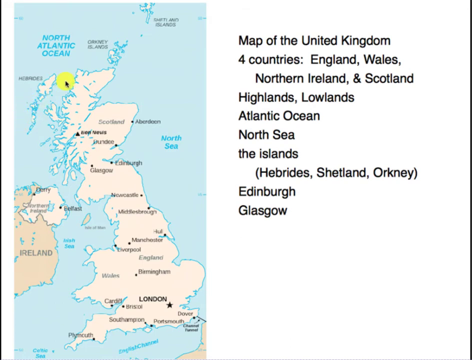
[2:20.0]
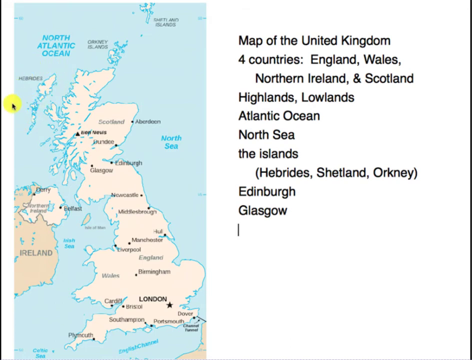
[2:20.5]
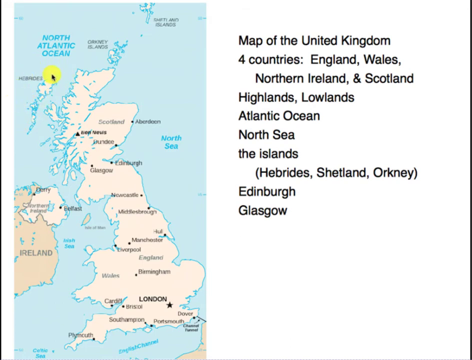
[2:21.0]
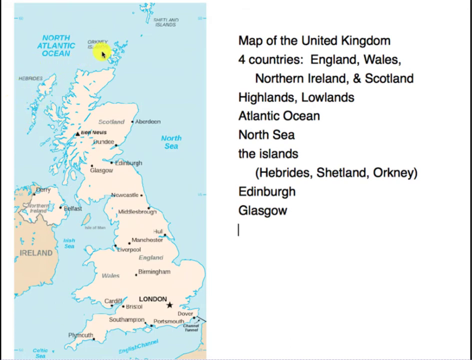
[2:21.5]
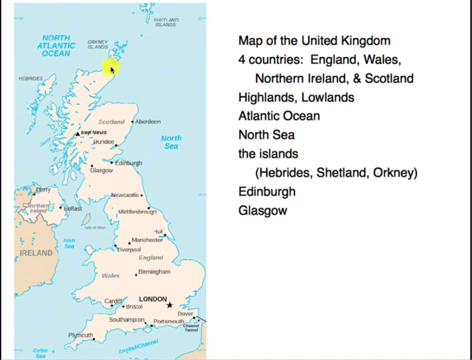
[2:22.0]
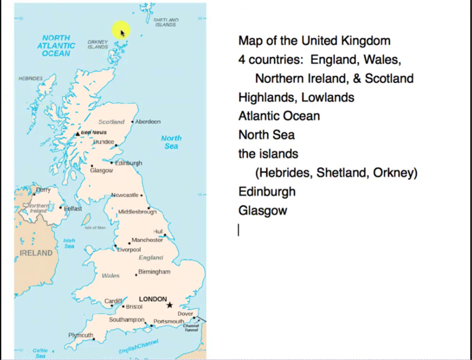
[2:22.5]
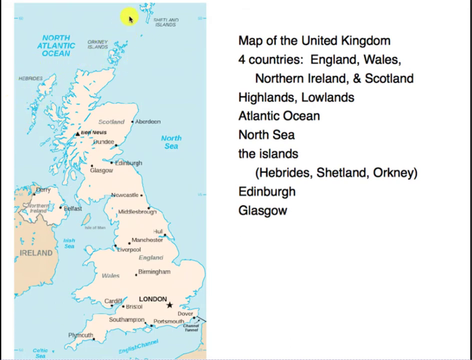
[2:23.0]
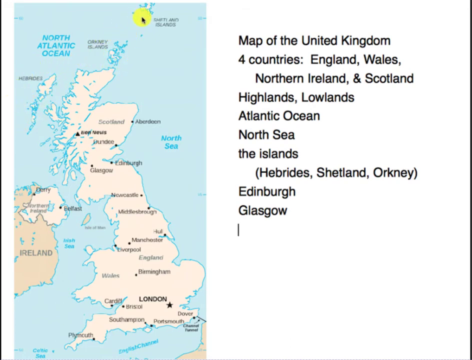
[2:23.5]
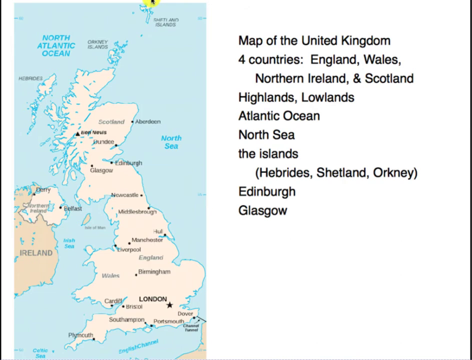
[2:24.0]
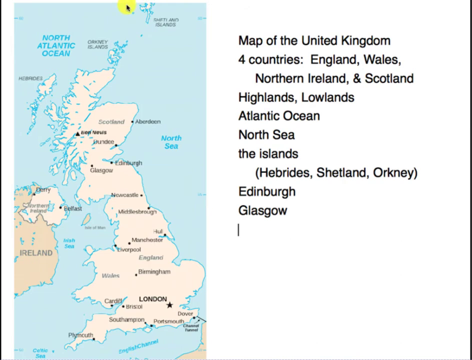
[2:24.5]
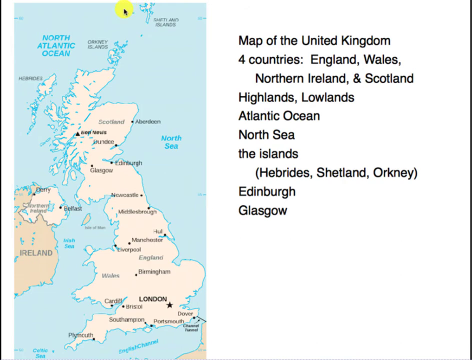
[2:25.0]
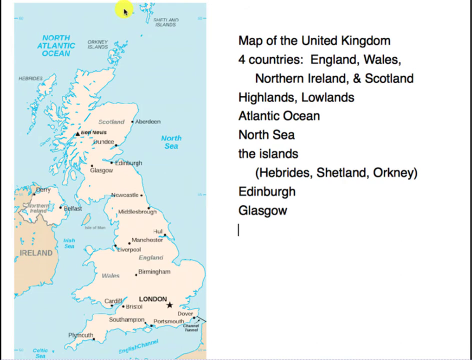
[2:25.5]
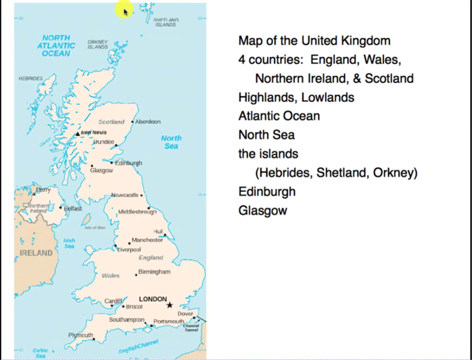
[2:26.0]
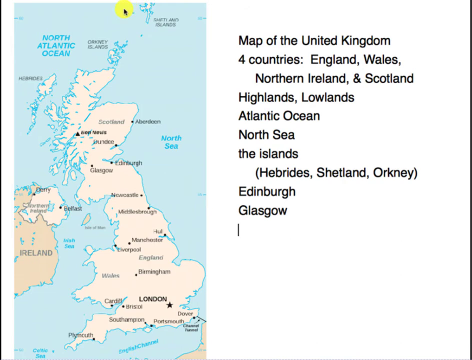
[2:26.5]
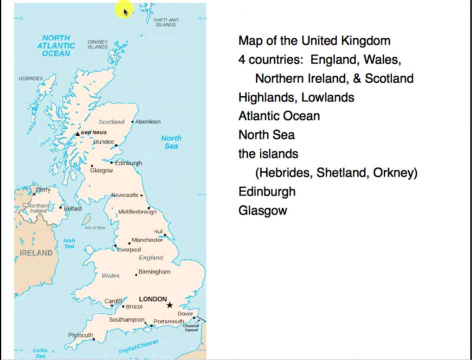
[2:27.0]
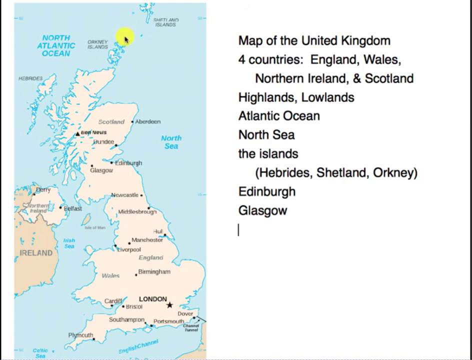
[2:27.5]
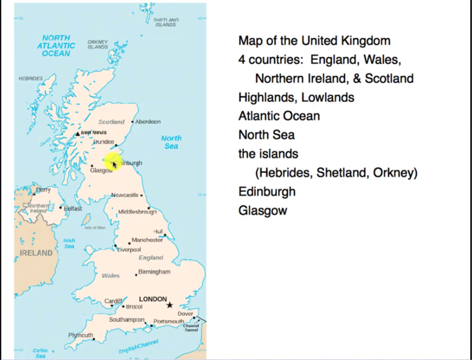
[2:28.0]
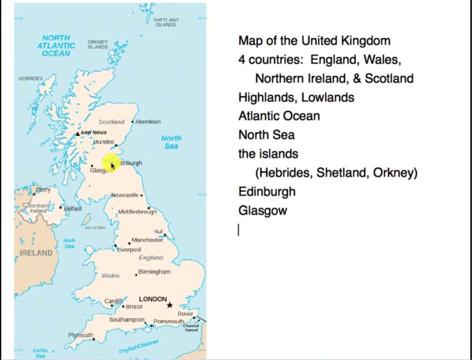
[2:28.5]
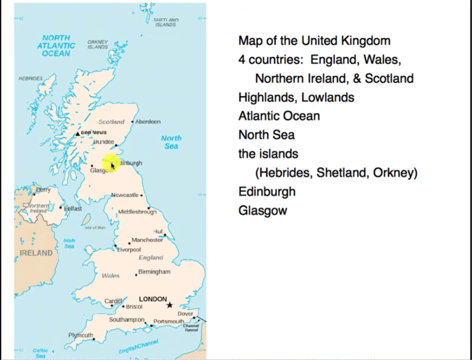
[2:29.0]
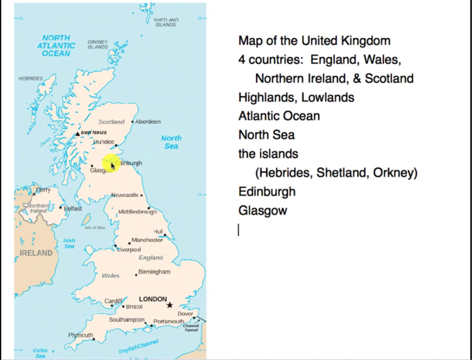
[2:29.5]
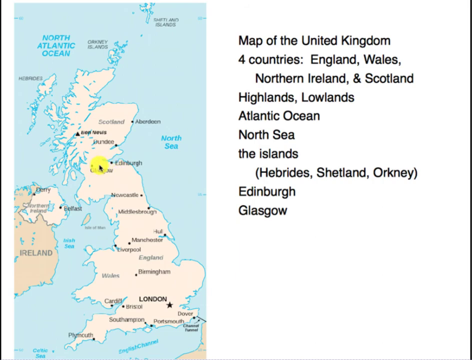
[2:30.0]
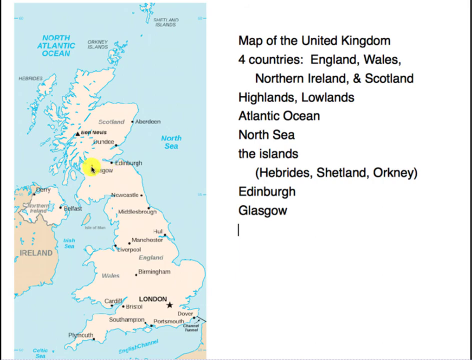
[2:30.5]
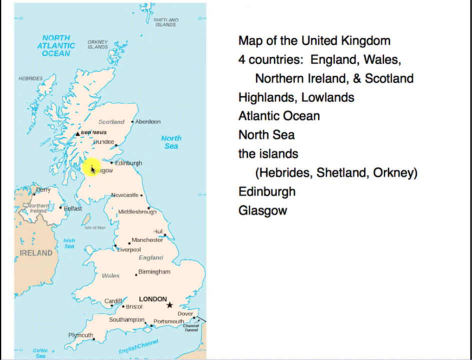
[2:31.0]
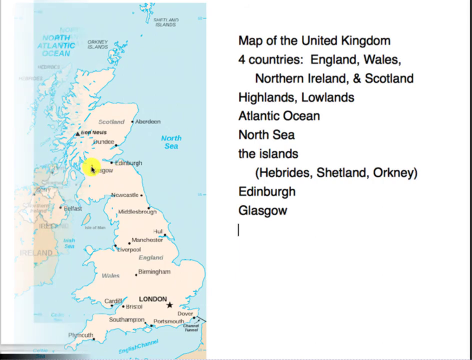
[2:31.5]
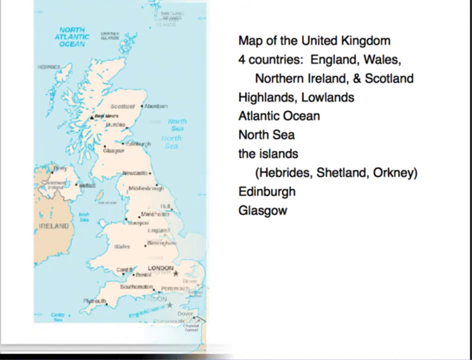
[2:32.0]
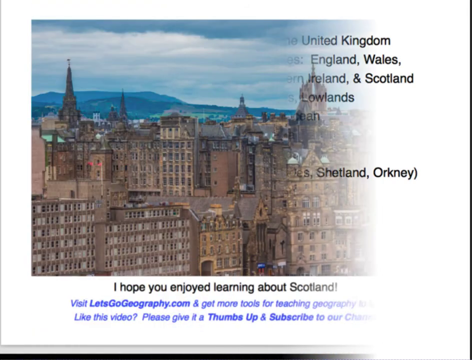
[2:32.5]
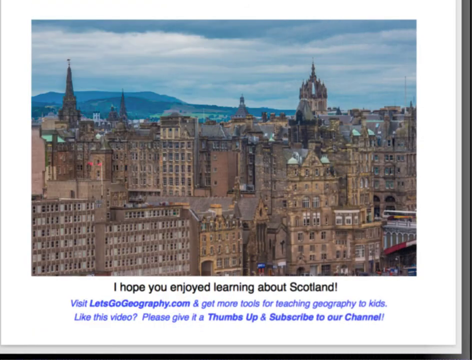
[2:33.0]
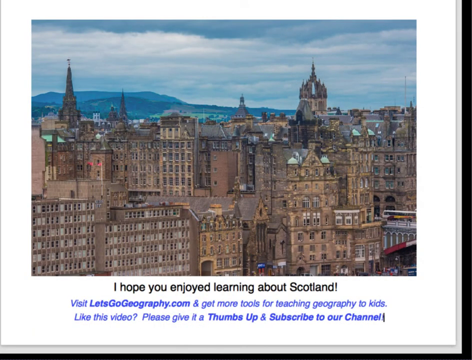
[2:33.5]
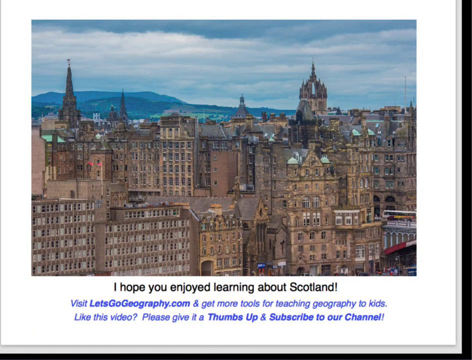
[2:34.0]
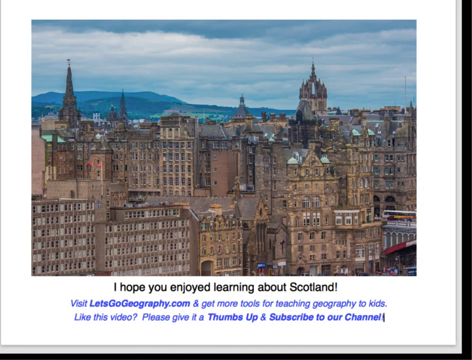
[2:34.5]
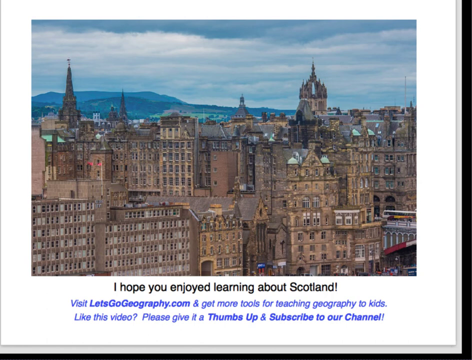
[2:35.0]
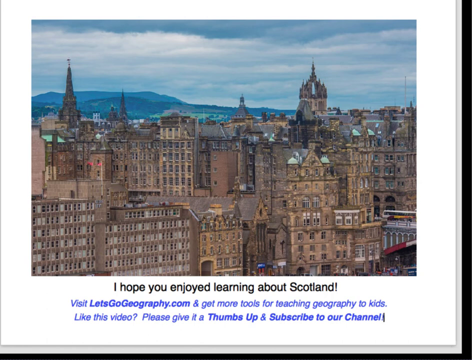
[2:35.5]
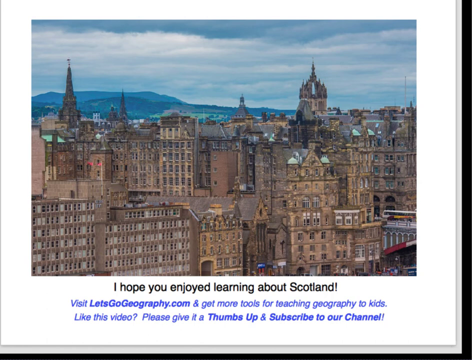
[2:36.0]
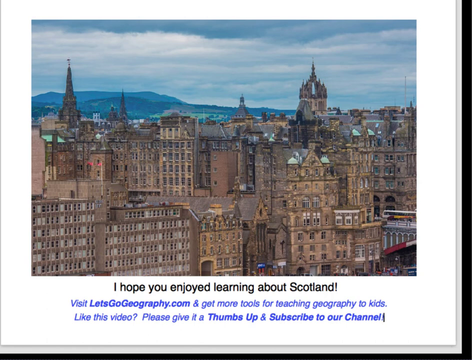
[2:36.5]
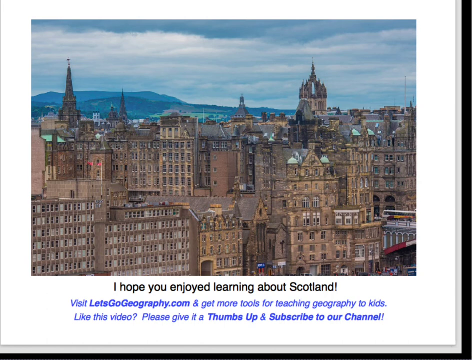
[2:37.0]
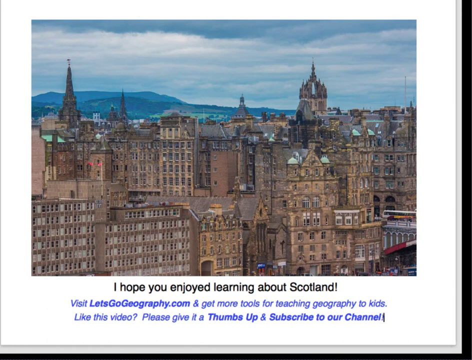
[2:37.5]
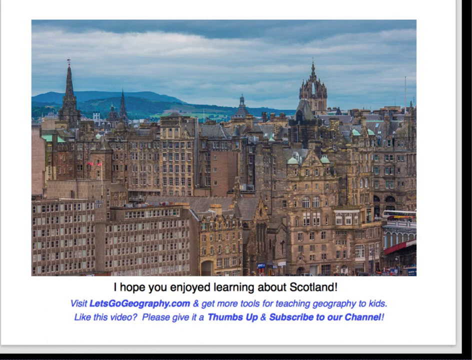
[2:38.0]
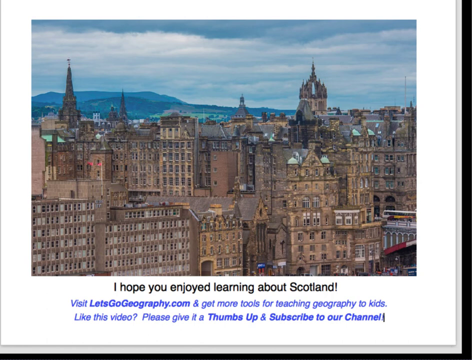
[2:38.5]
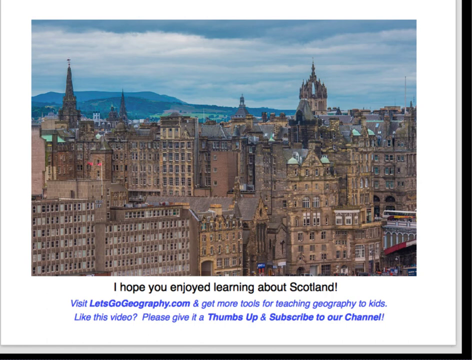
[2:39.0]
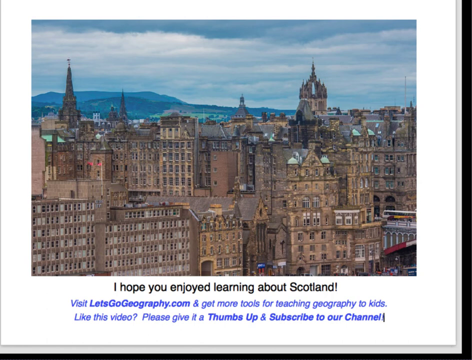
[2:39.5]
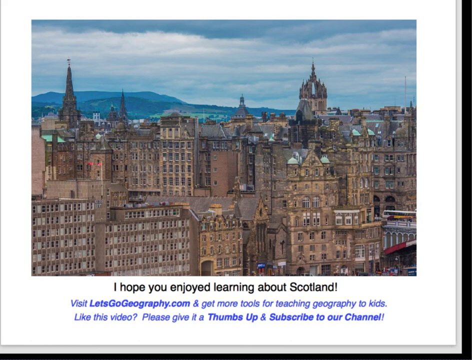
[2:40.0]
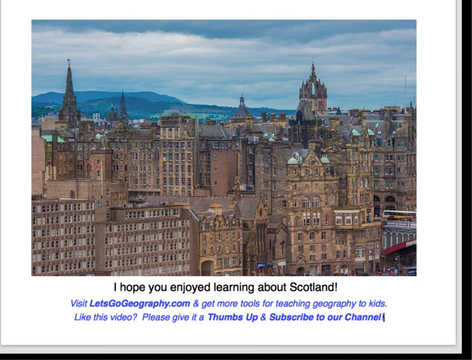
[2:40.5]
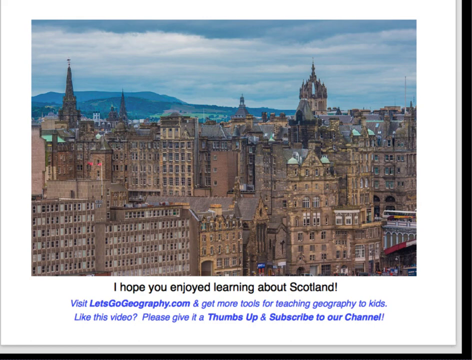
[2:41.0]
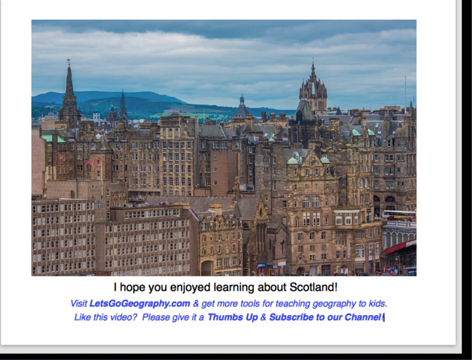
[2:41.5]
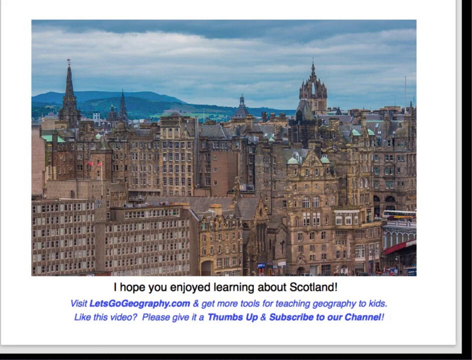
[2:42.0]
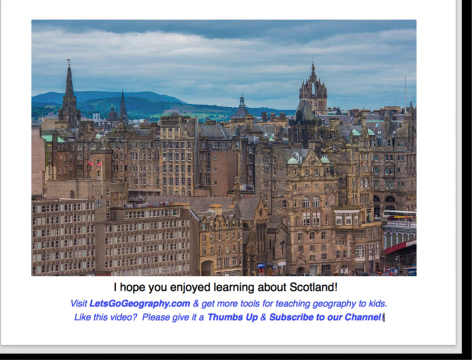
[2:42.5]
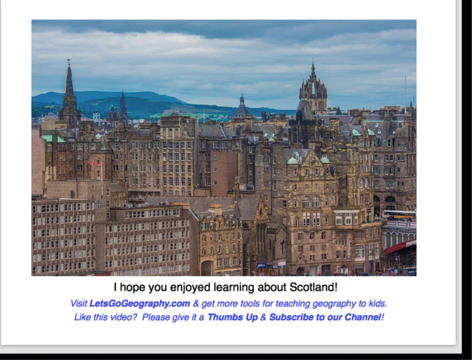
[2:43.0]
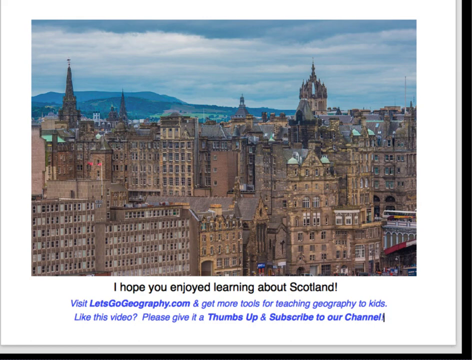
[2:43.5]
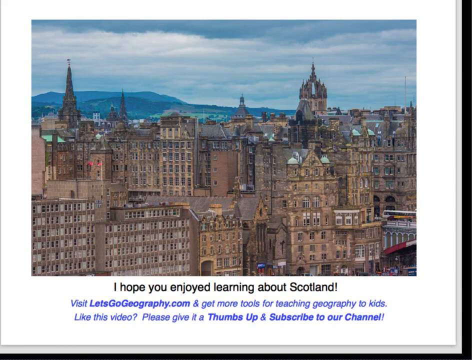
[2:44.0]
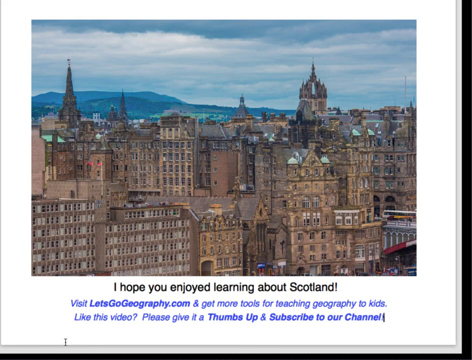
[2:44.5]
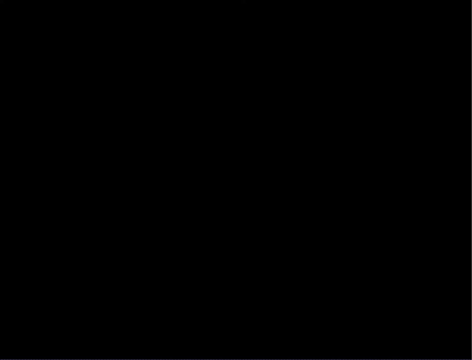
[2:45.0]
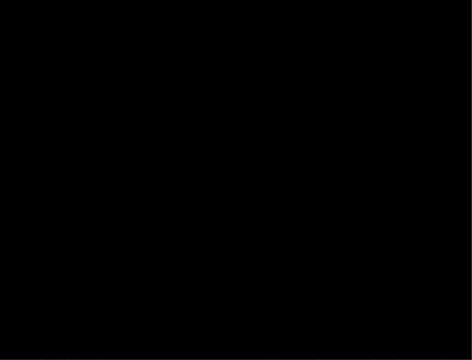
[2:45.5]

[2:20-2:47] The yellow cursor continues to highlight various parts of the map of the United Kingdom, including Edinburgh and Glasgow. The slideshow then moves to a picture of a large castle building; there are many in the image, in gold, bronze and copper colors. In the far distance are tall mountains and rolling hills under a dark blue sky with lots of clouds rolling in. The text at the bottom reads, "I hope you enjoyed learning about Scotland. Visit LetsGoGeography.com and get more tools for teaching geography to kids. Like this video? Please give it a thumbs up and subscribe to our channel. Thanks for watching." This text and image are presented on a solid white background, and both text sections are in the same font but in different colors.